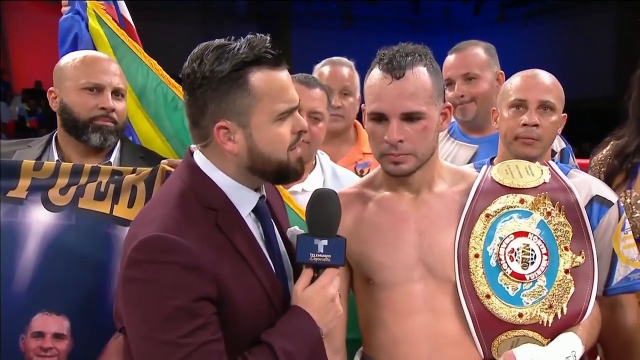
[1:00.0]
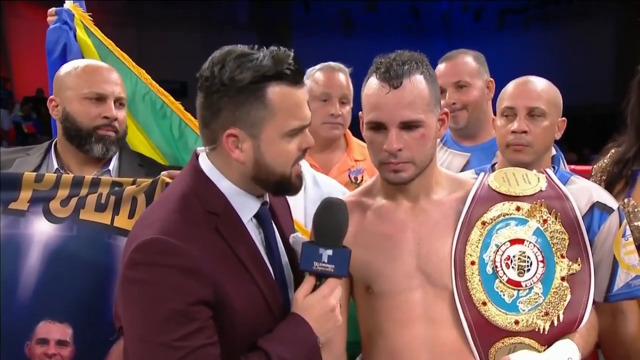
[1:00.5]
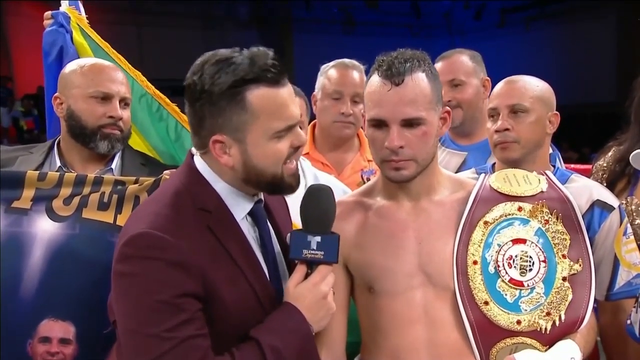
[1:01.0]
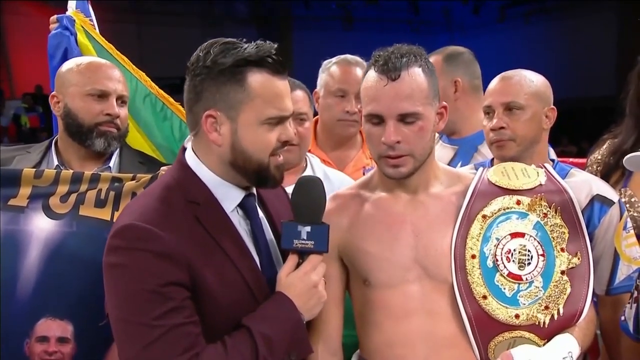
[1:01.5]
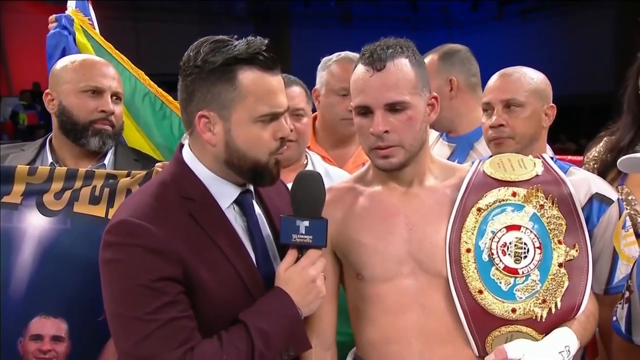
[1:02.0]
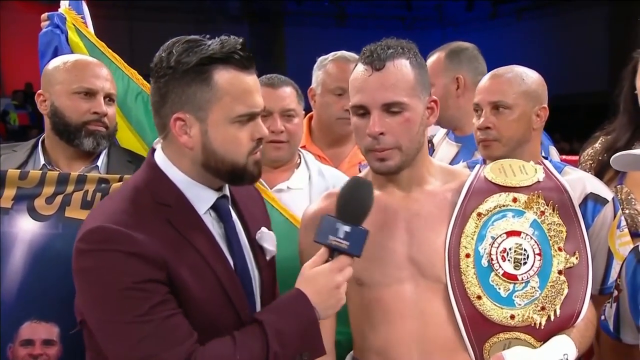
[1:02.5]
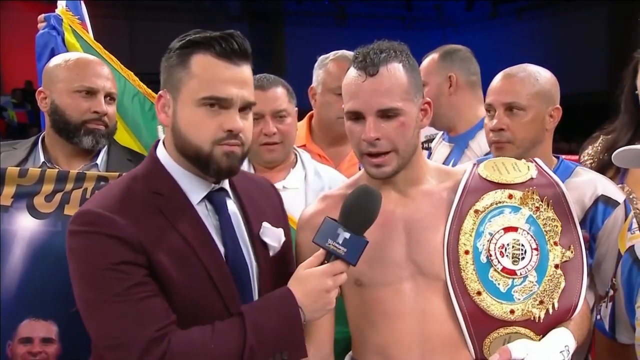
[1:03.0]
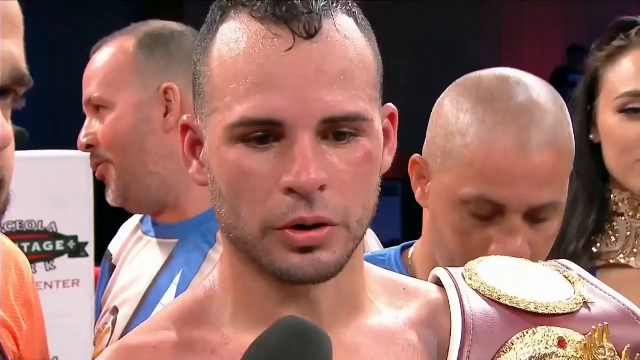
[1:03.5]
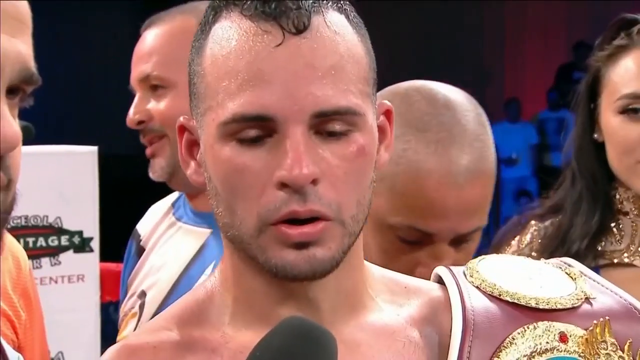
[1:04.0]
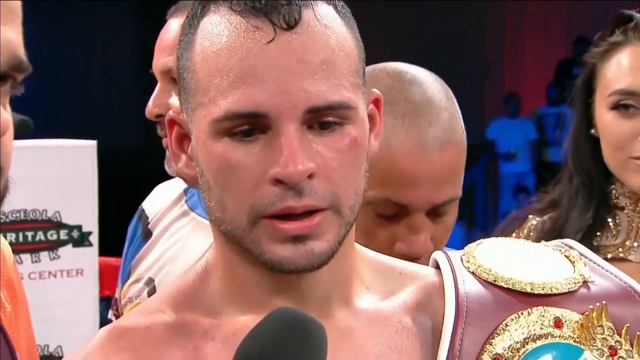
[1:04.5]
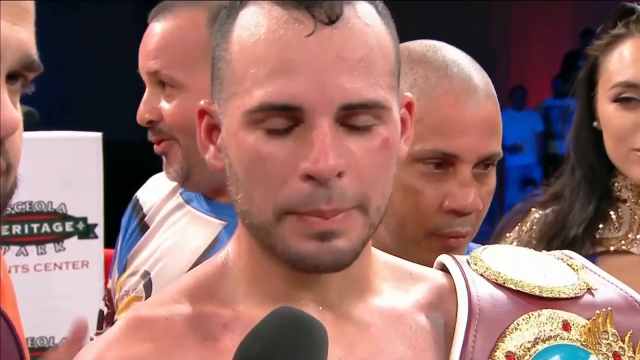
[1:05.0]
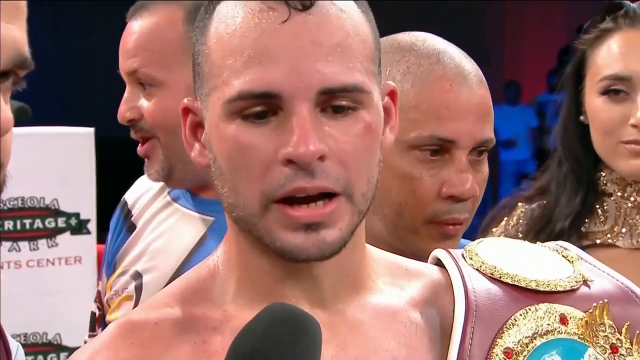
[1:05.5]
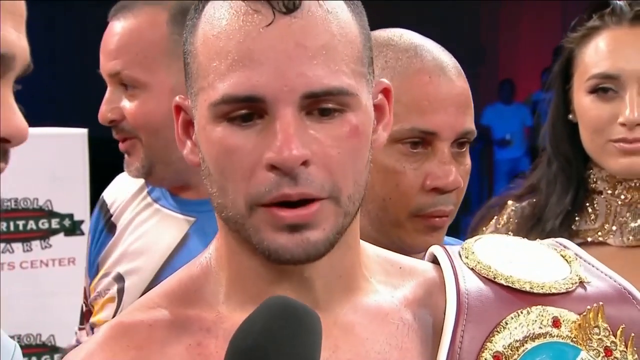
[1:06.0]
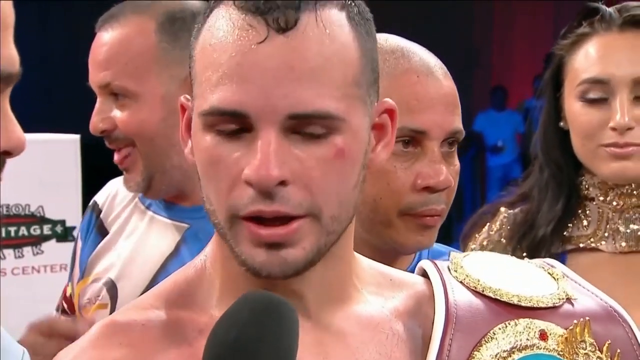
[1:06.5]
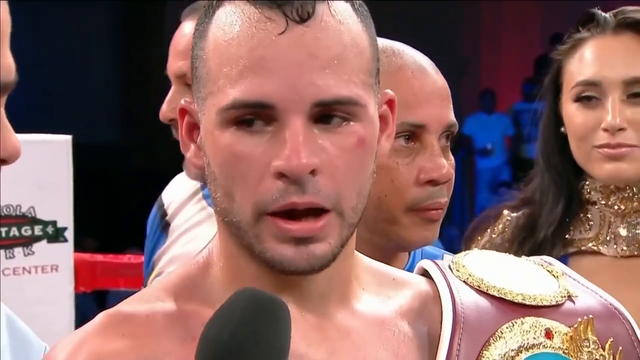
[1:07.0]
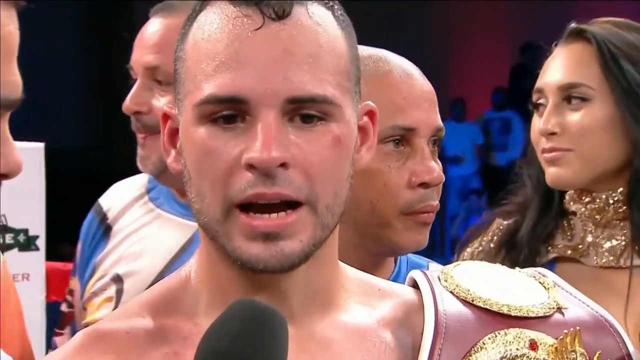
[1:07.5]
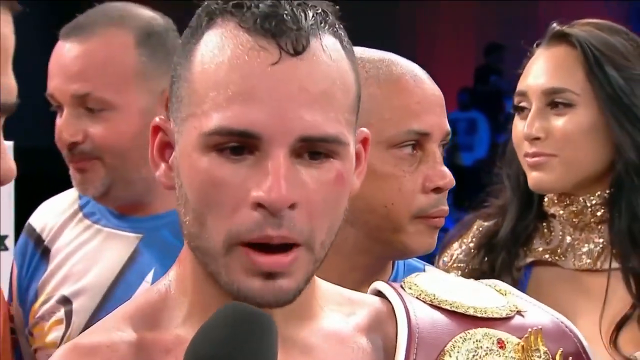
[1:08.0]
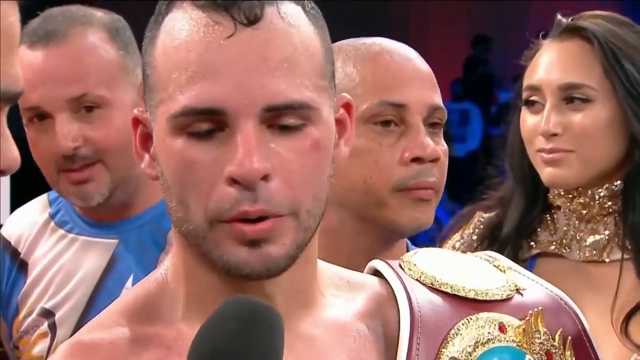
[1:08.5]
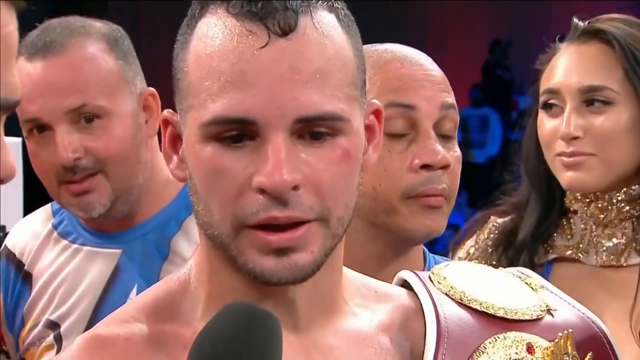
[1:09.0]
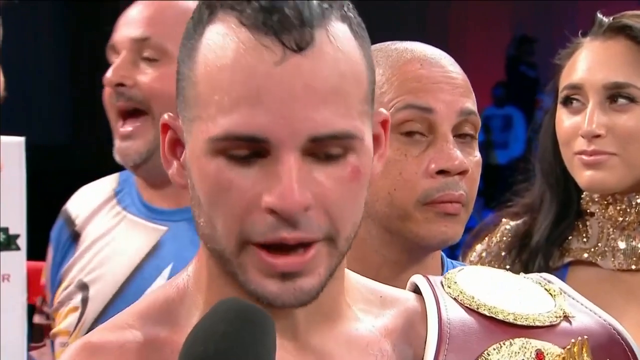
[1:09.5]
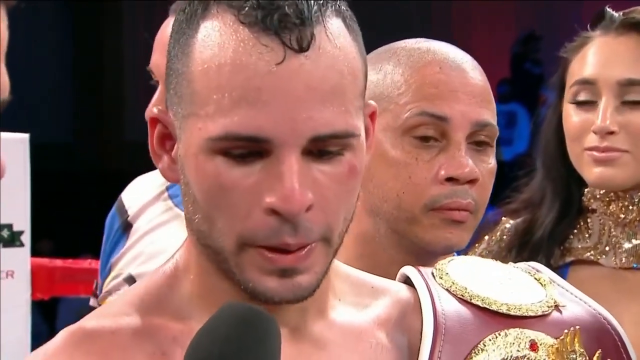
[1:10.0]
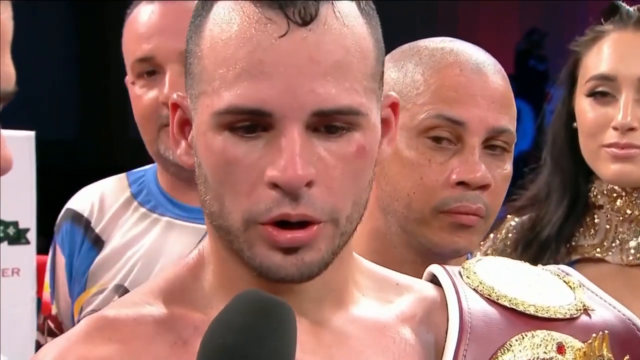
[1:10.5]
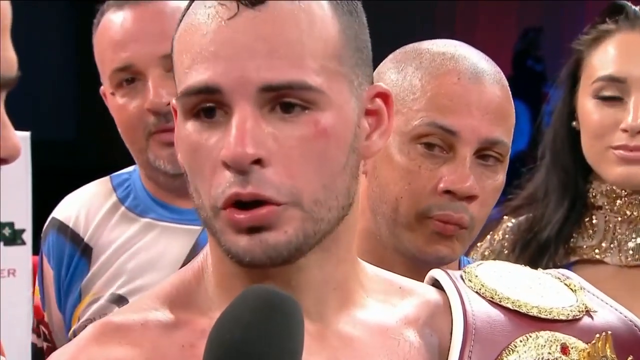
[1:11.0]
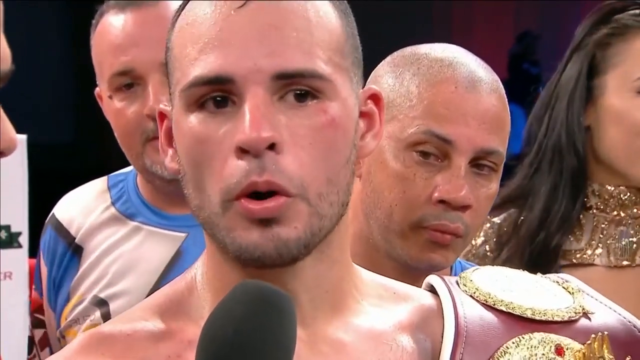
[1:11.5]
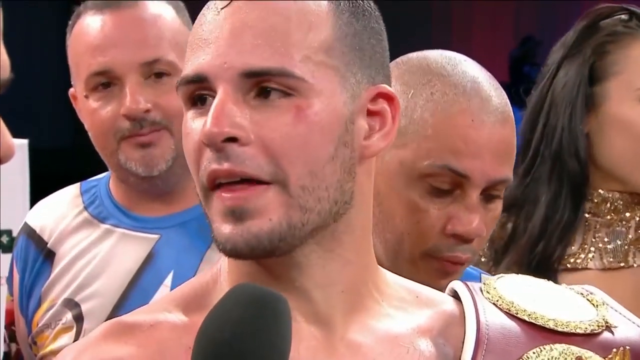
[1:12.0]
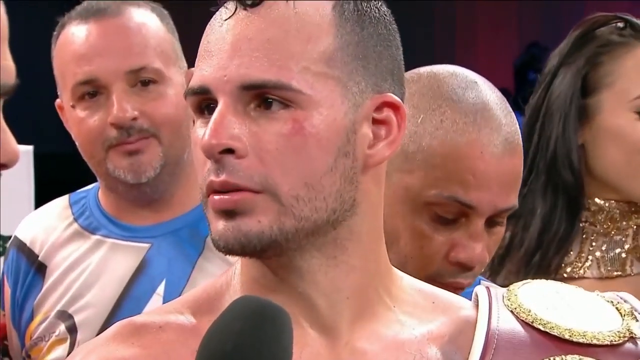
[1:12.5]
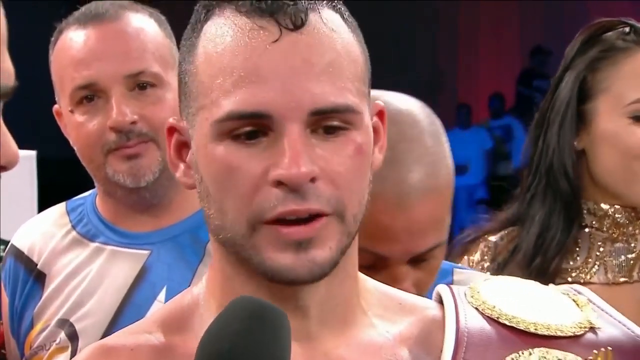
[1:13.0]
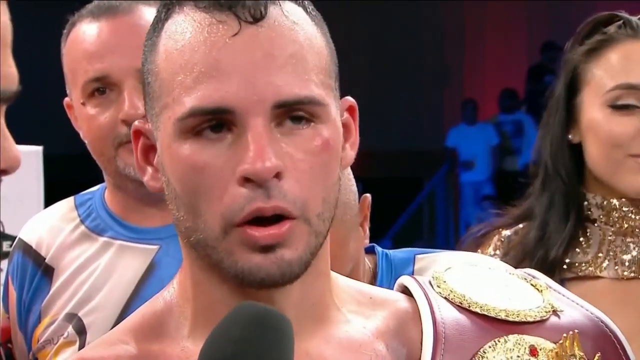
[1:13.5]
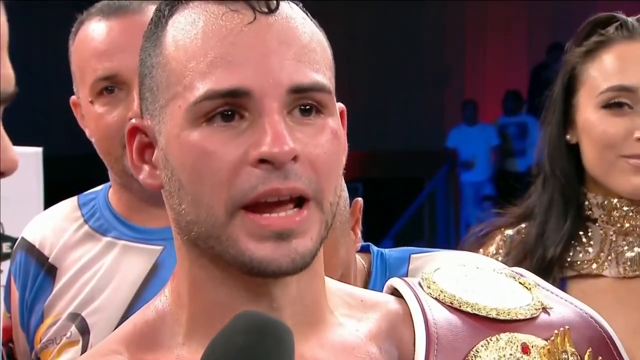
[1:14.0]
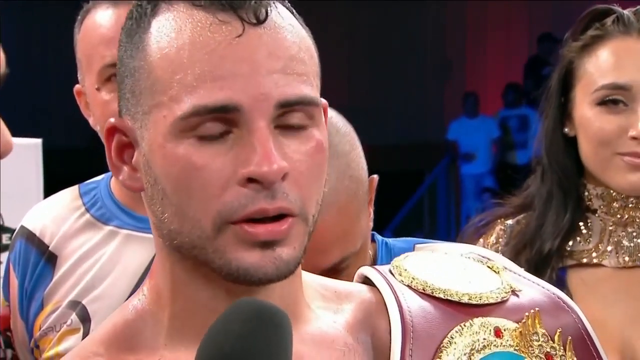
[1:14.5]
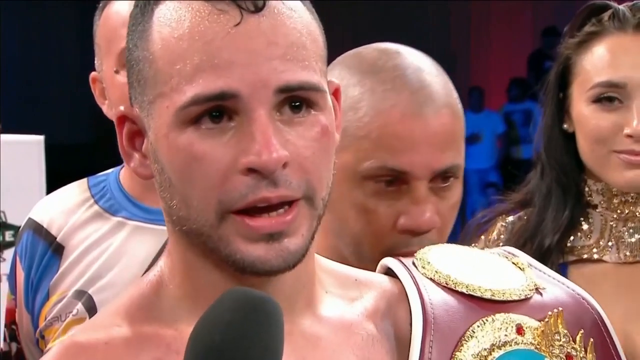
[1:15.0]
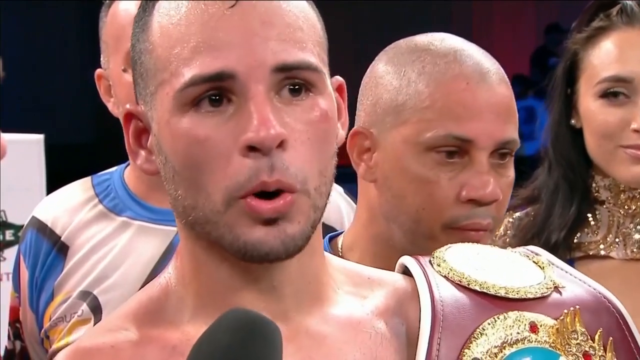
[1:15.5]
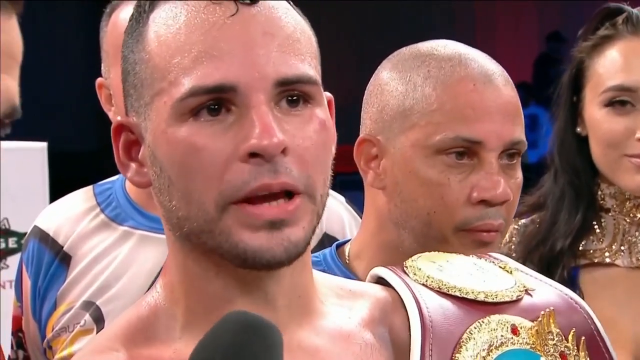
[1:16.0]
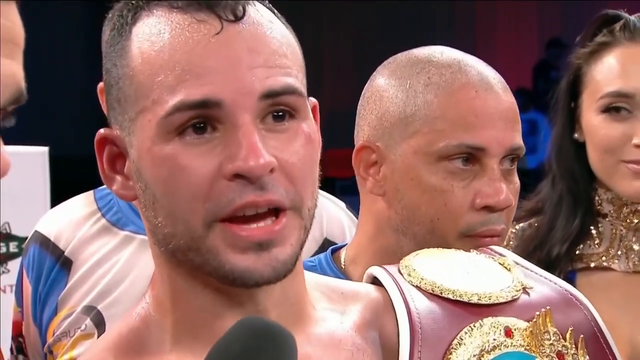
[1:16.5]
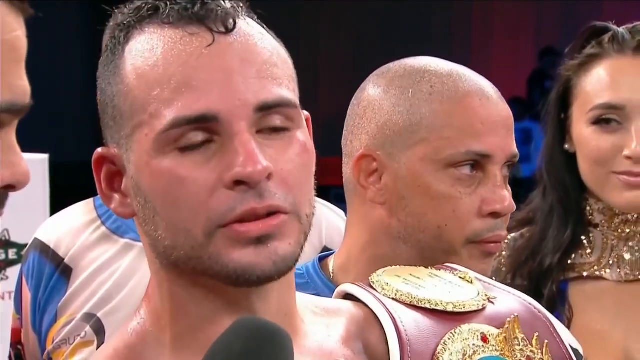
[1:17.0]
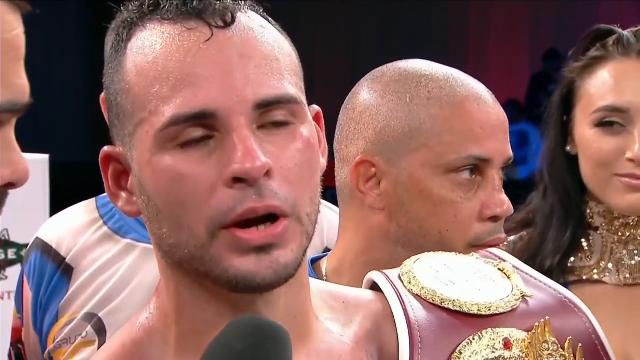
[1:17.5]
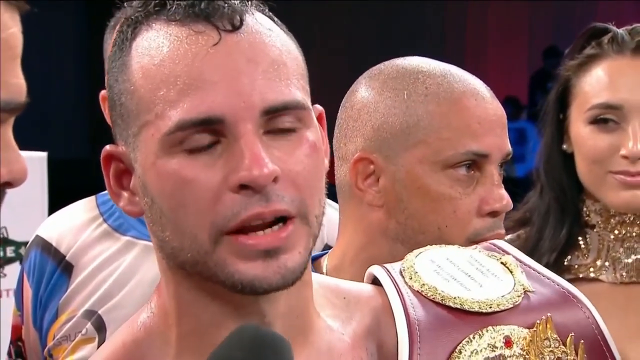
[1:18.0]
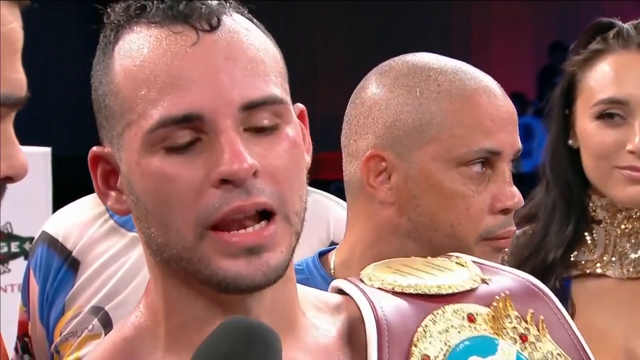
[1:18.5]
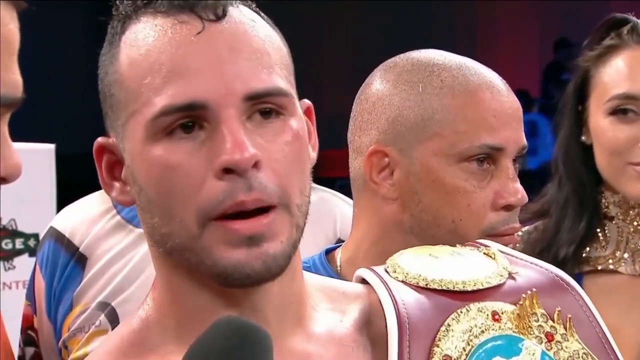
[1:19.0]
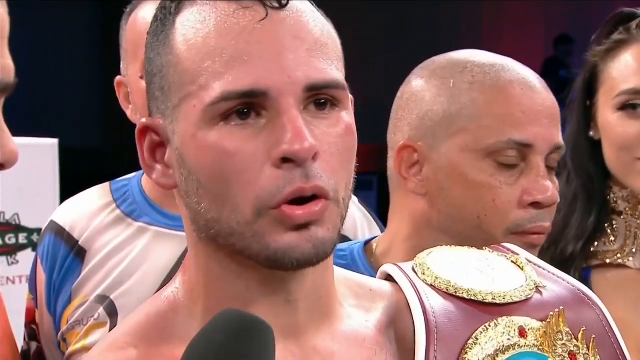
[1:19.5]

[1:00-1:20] On the left side of the screen is the bald, bearded man in a black jacket and white open-necked shirt. He holds some sort of flag in front of him, creased at the top, which appears to read "PUER", possibly a Puerto Rico flag. To the right is the interviewer, and just past him is half of a man's face, with his left shoulder also visible. Just above that is the top of an orange shirt, and the man previously seen wearing it is visible. The boxer is bare-chested and hairless on his chest, with short dark hair on his head. Behind him are two individuals in white and blue shirts, one taller with short dark hair and one bald and shaven-headed. The boxer still has the belt over his left shoulder, and the young woman is visible. The shot then moves to a more centered image of the boxer, speaking again. At this angle he is flanked on the left by the taller man with short dark hair in the white and blue top, and above his left shoulder and the belt is the shaven-headed man. The young woman is again on the far right of the screen.